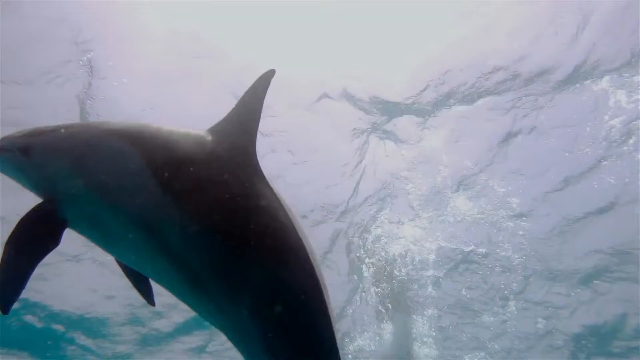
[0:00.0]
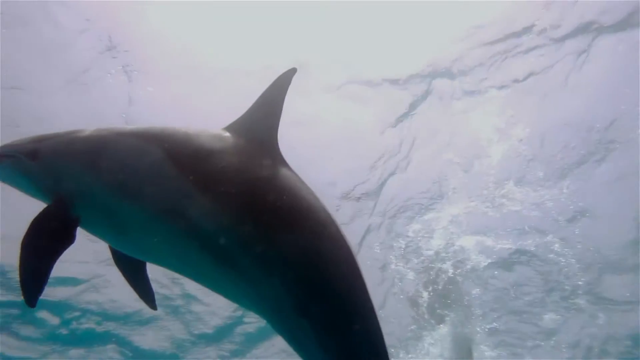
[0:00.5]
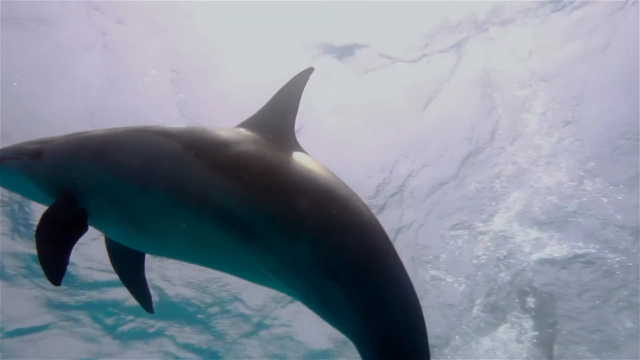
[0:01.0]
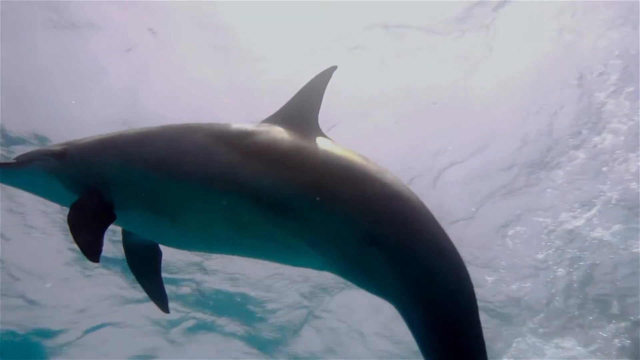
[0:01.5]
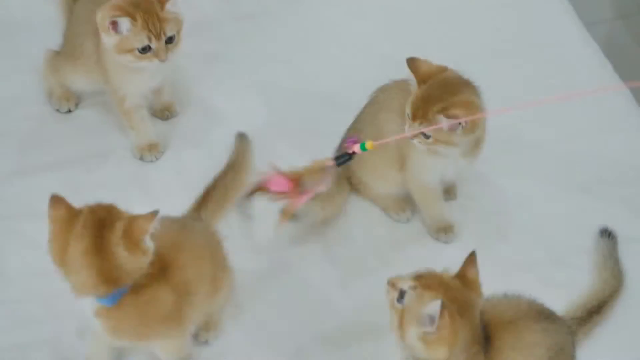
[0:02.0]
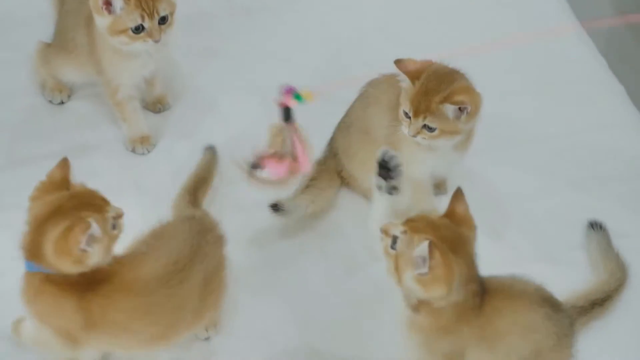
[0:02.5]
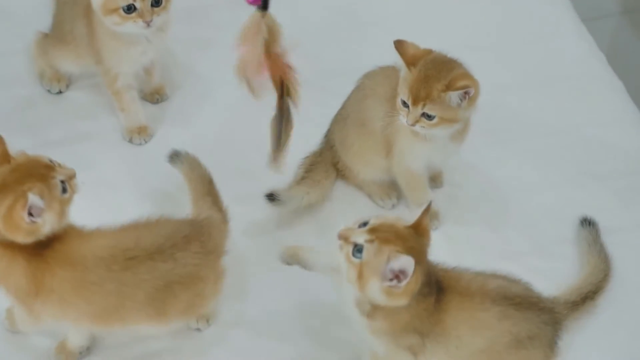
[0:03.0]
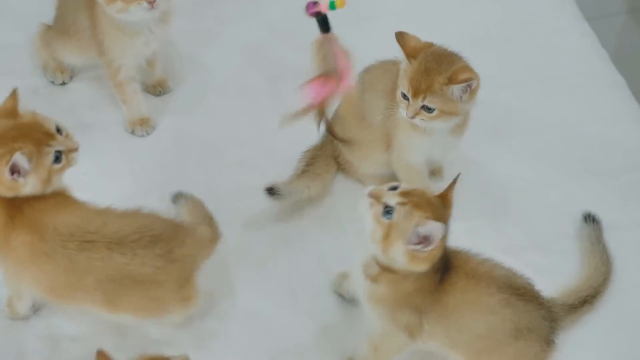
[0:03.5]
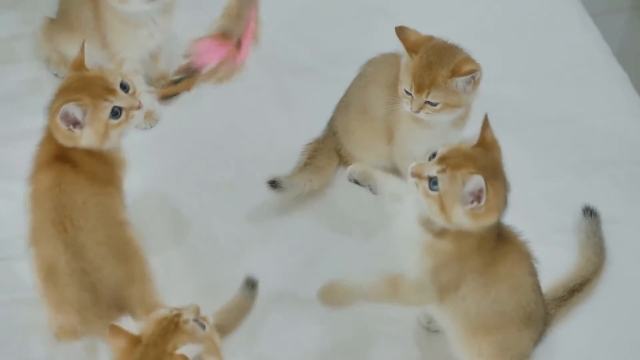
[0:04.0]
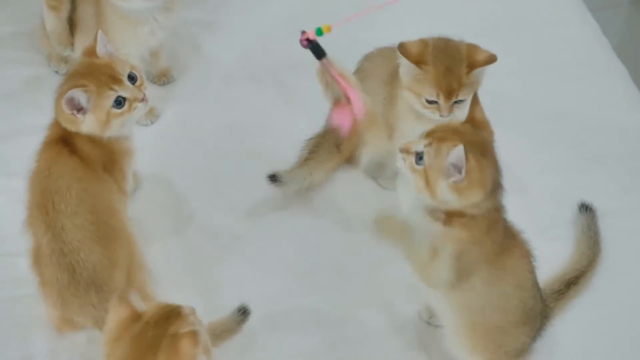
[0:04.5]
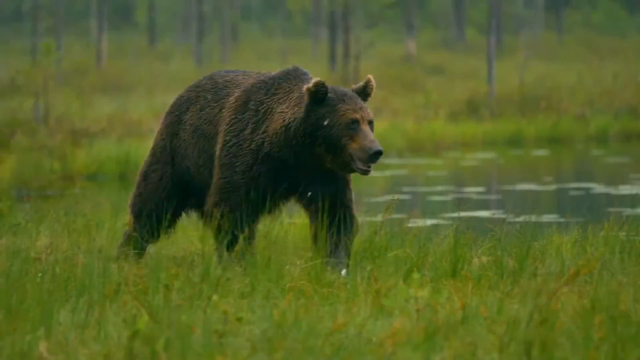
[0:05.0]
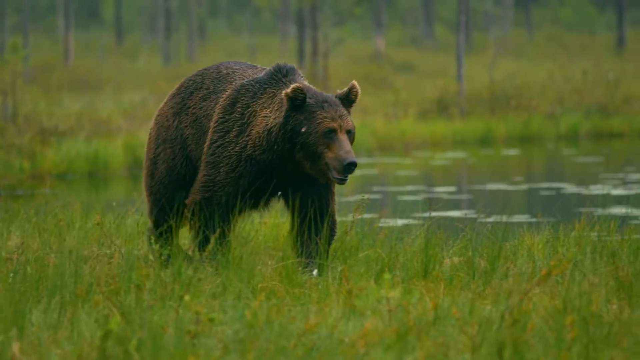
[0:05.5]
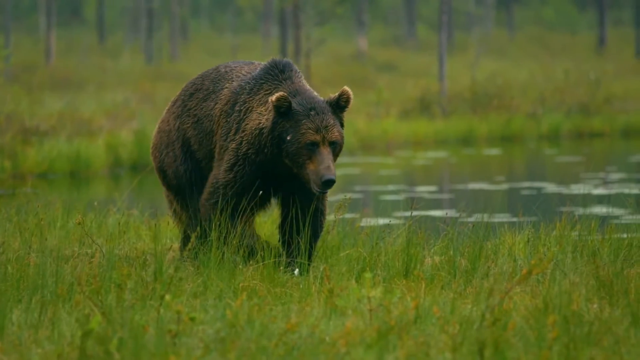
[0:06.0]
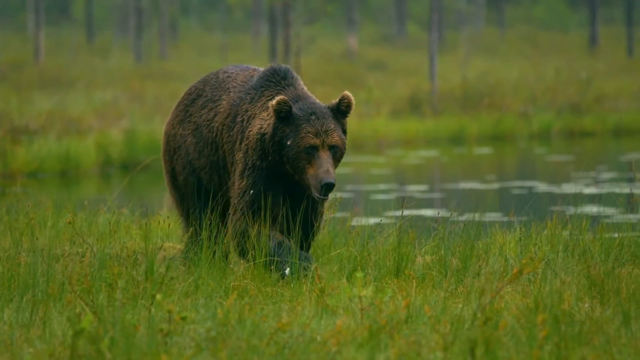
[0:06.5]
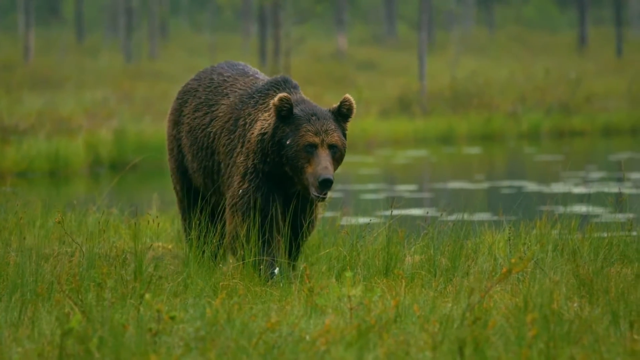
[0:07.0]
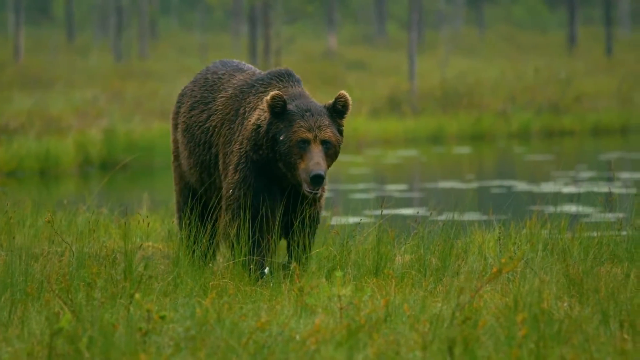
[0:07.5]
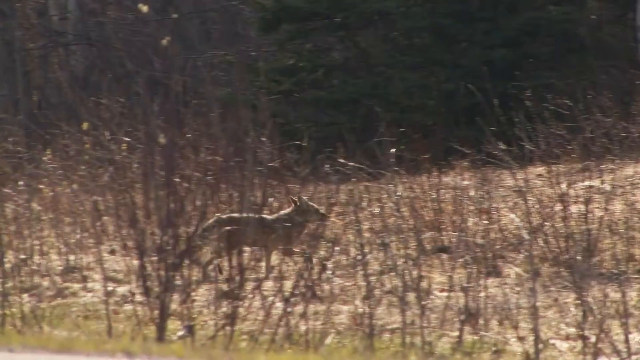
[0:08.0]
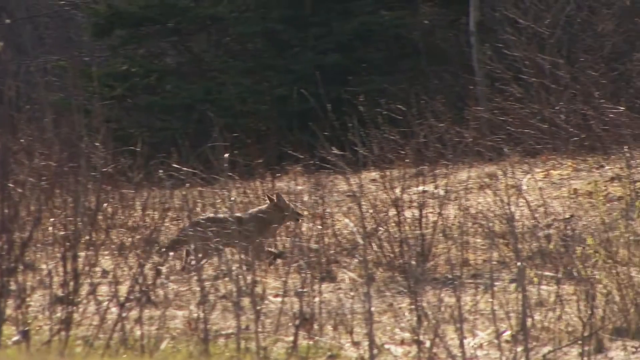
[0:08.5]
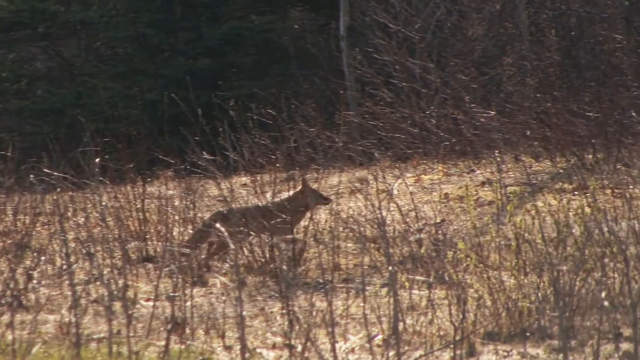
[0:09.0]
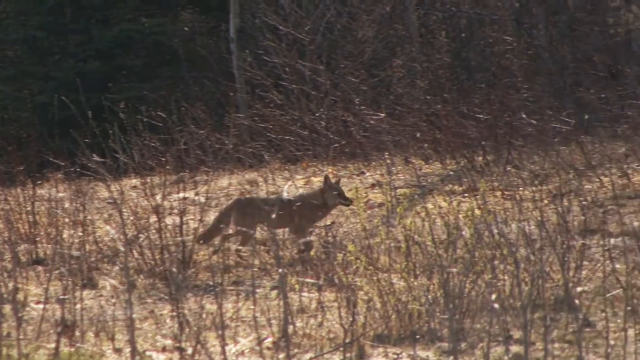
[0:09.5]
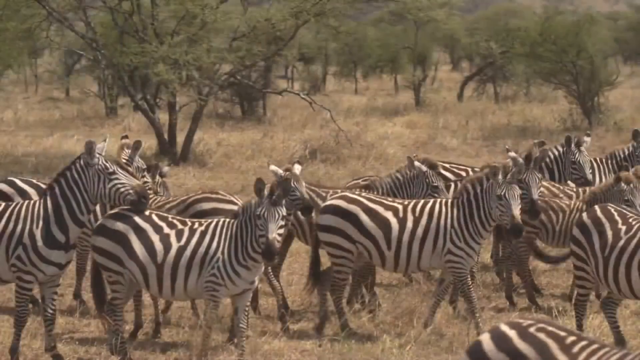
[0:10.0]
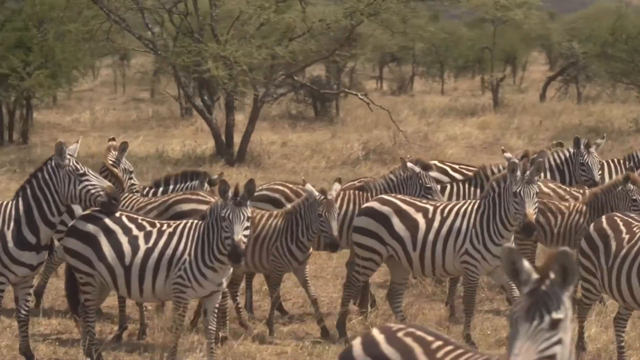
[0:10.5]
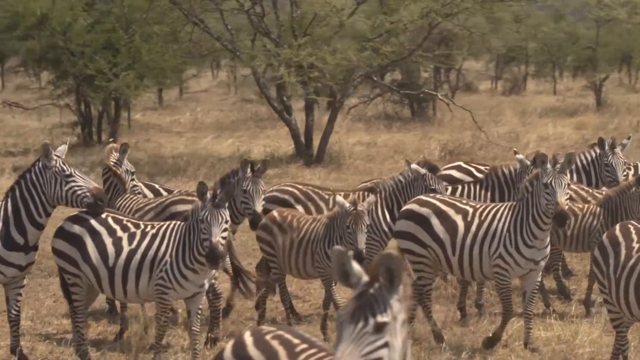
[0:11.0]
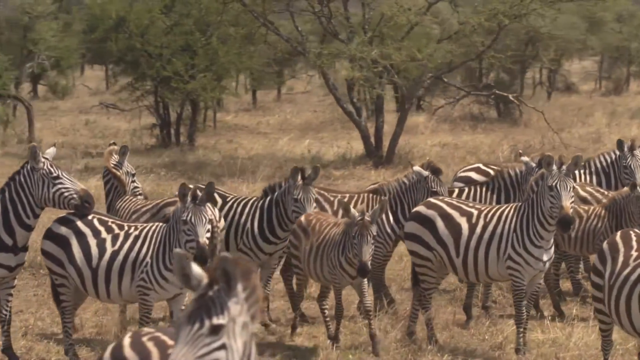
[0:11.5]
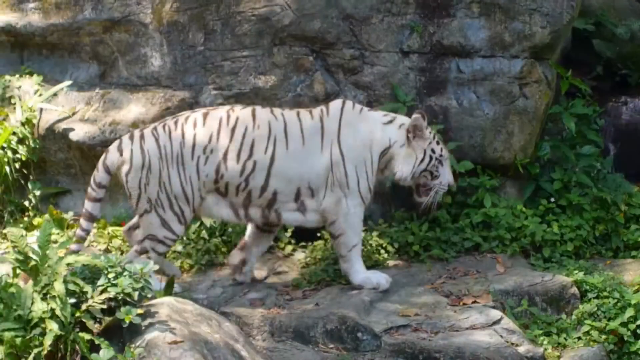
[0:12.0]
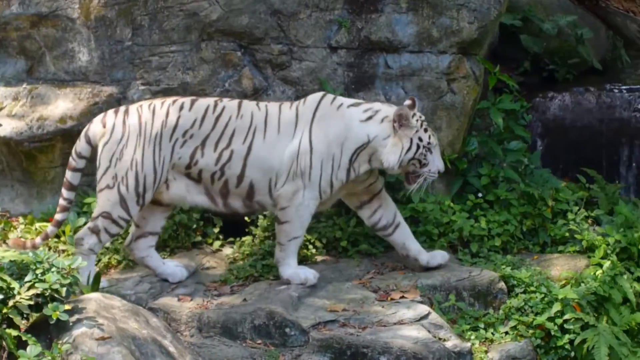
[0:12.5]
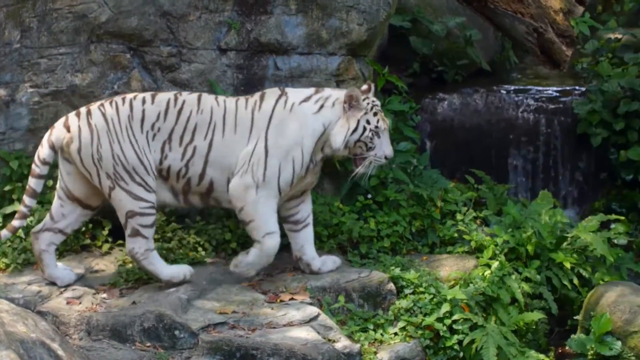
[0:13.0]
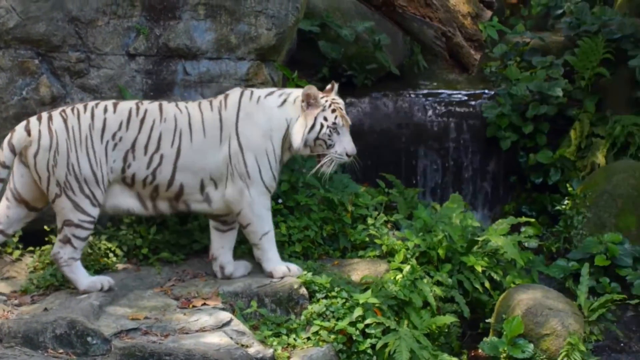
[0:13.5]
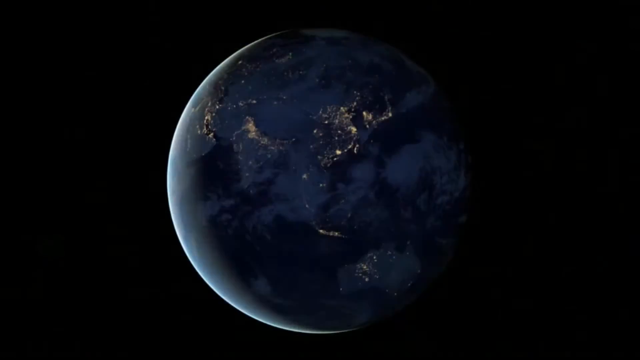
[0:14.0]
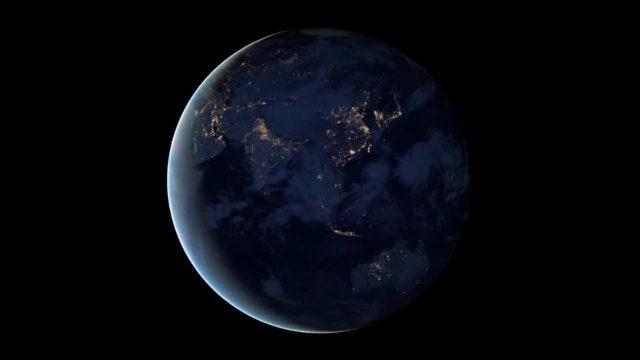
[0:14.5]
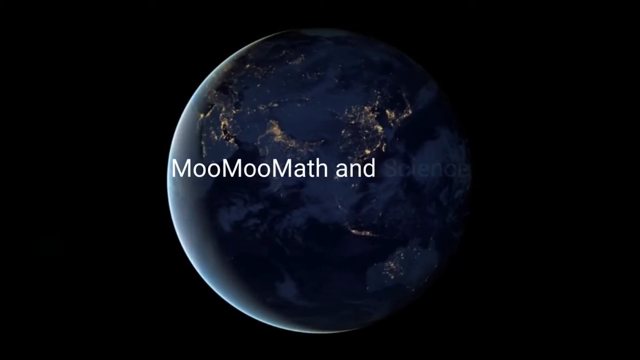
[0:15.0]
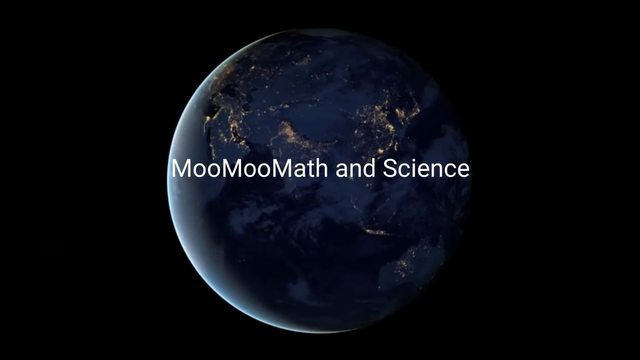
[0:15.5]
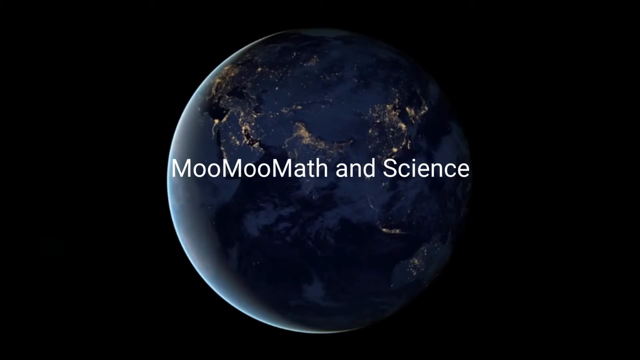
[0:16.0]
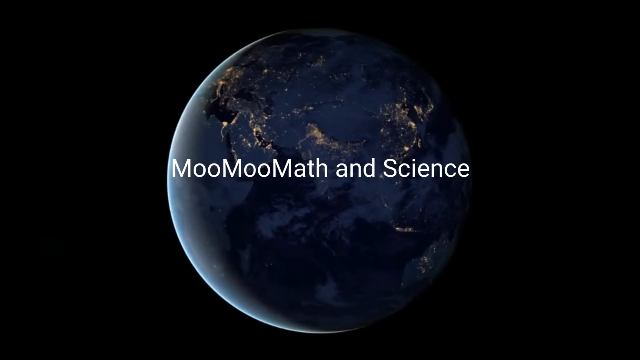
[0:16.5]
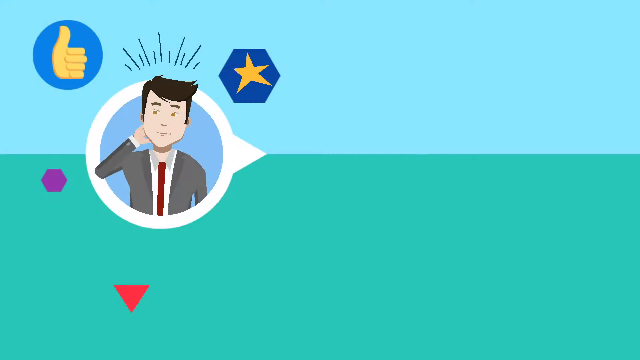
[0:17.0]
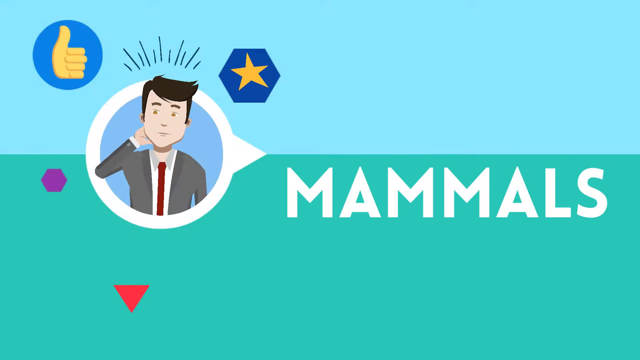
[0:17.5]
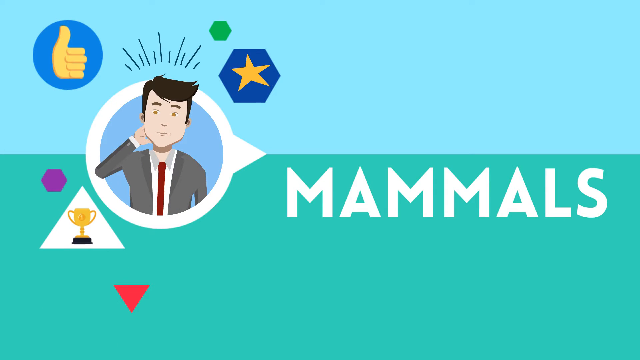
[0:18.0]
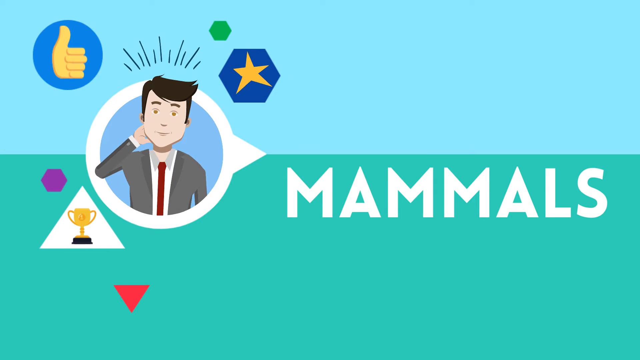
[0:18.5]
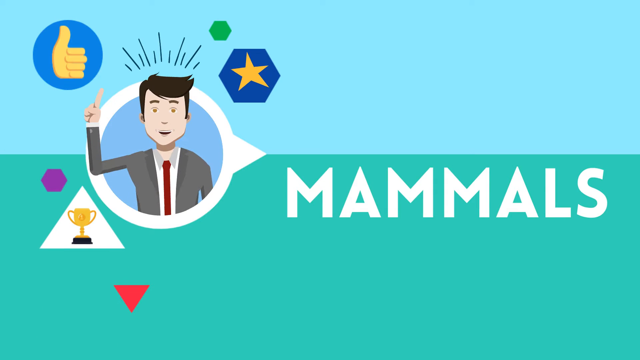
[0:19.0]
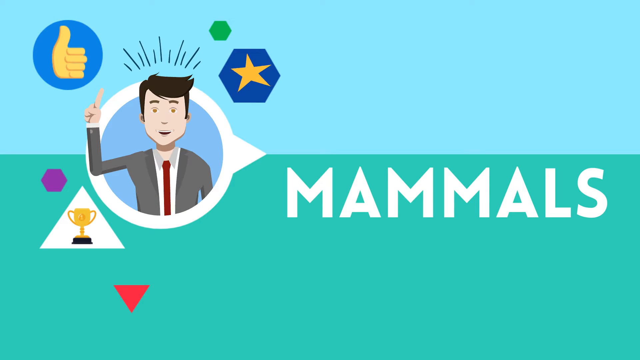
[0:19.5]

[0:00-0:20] A shark swims in the ocean; it is black and blue with some shades of white. Next, four cats play with what seems to be a toy for animals. The cats are brown, with white underneath. A polar bear appears, followed by what looks like a hyena. A white tiger walks by the mountain, beside a water stream, near what is either a waterfall or a water stream. Zebras are also shown. The bear is in a forest and walks past a river. An unidentified brown animal walks through what looks like a Saharan desert. All the animals seem to be mammals.